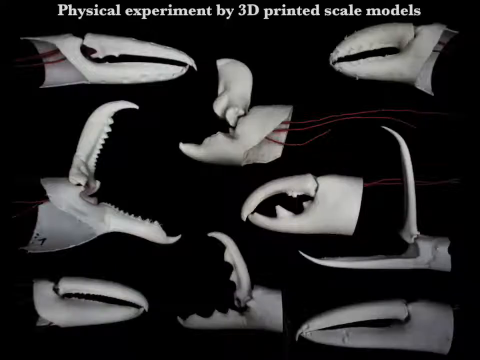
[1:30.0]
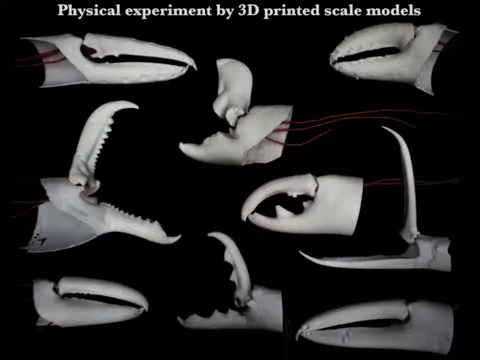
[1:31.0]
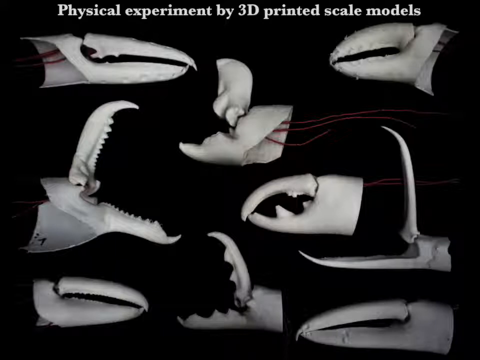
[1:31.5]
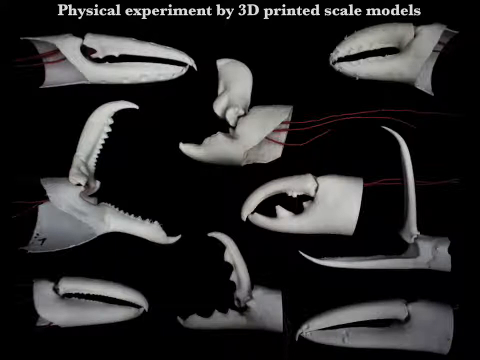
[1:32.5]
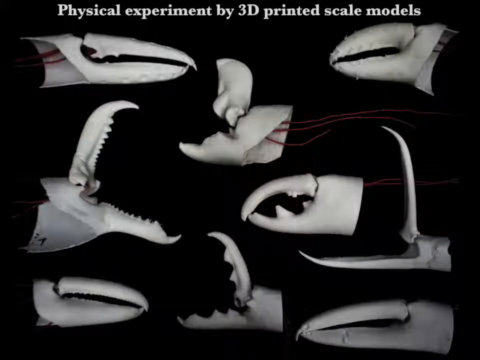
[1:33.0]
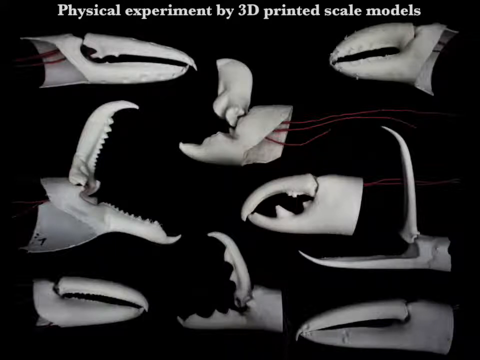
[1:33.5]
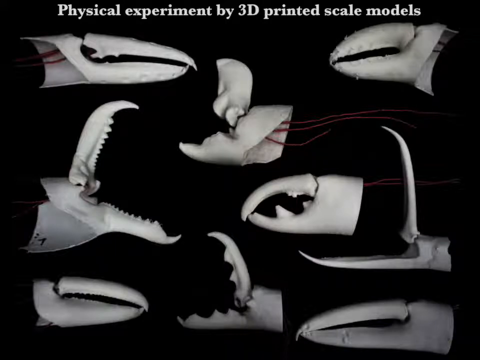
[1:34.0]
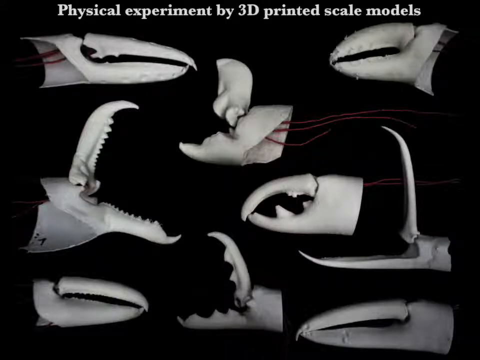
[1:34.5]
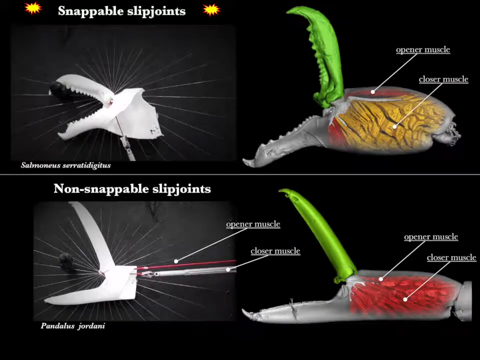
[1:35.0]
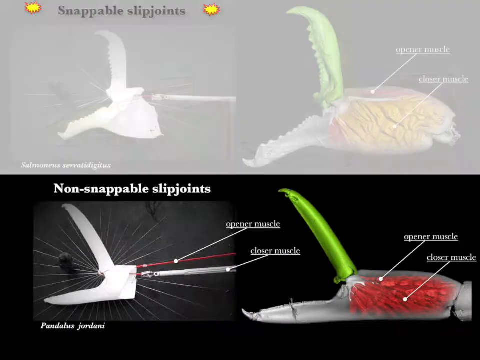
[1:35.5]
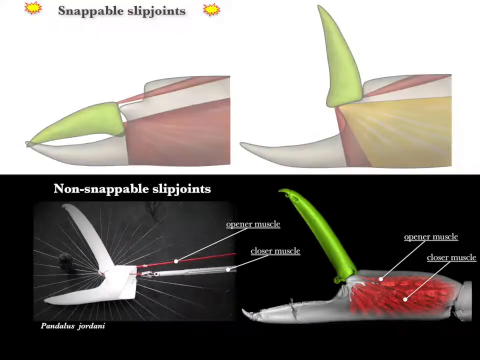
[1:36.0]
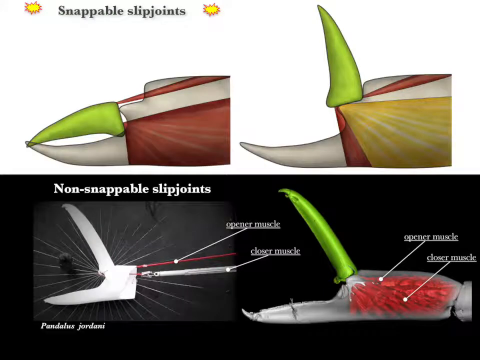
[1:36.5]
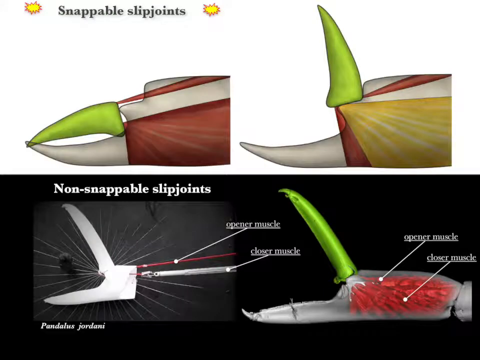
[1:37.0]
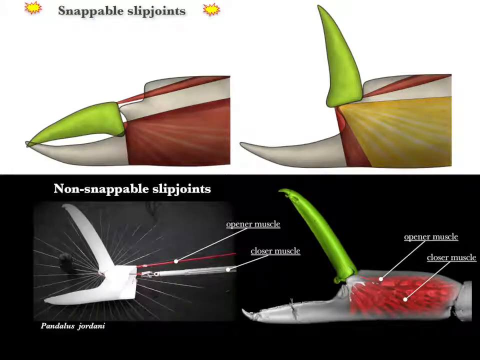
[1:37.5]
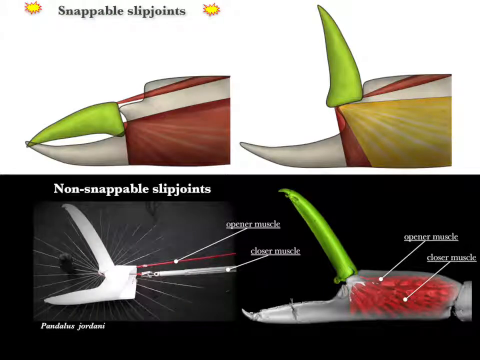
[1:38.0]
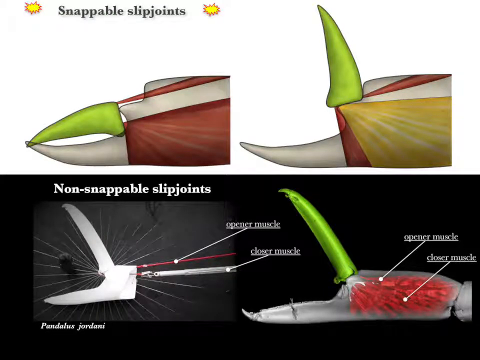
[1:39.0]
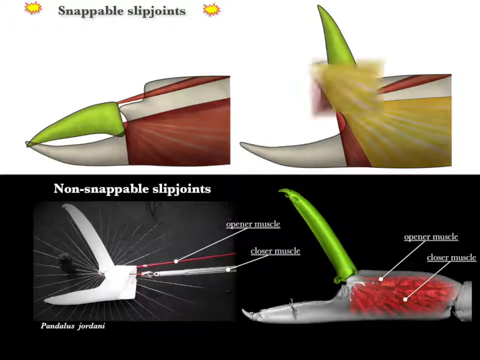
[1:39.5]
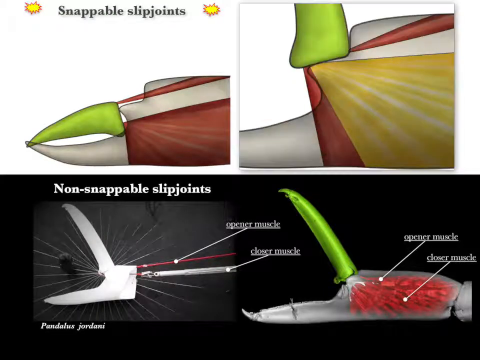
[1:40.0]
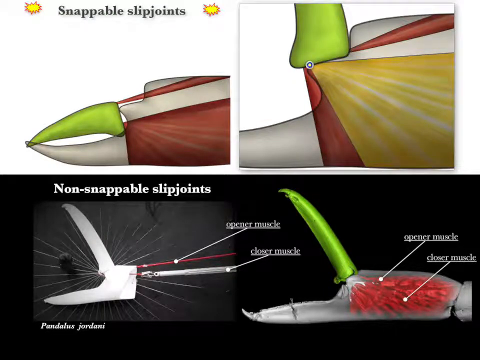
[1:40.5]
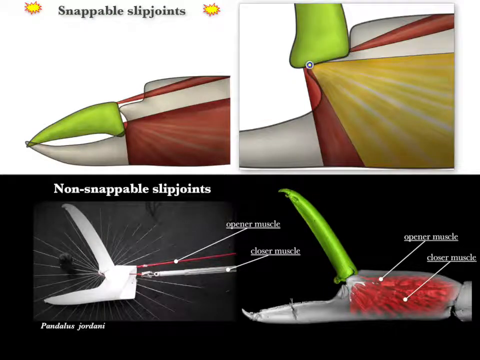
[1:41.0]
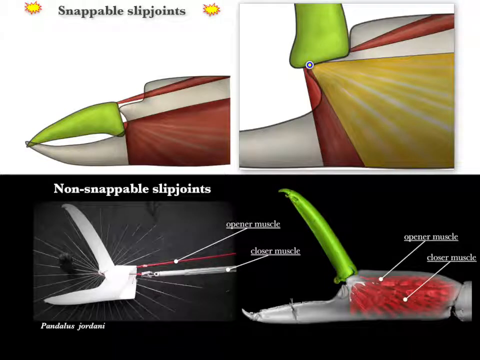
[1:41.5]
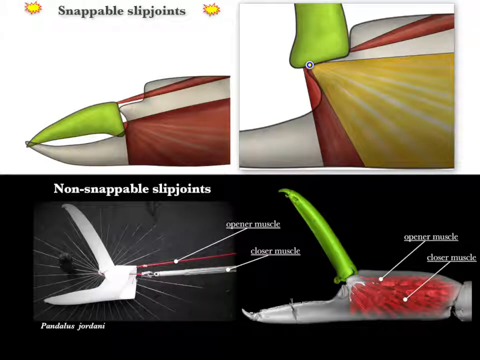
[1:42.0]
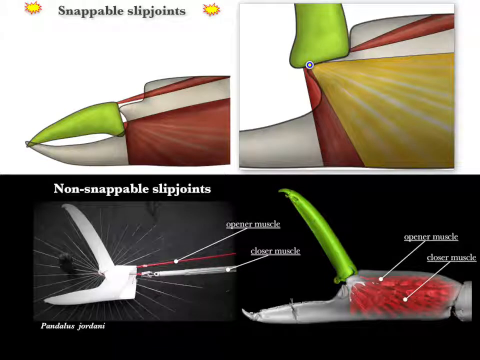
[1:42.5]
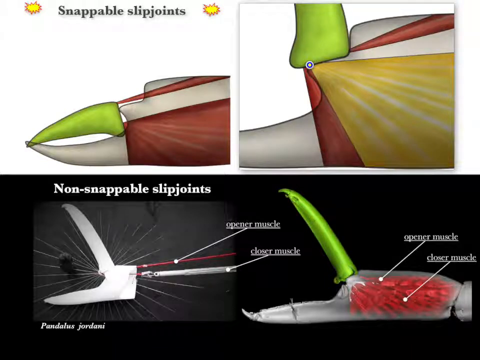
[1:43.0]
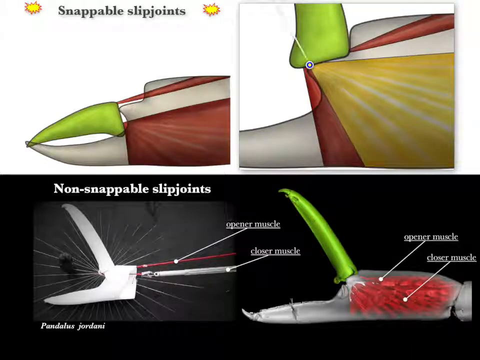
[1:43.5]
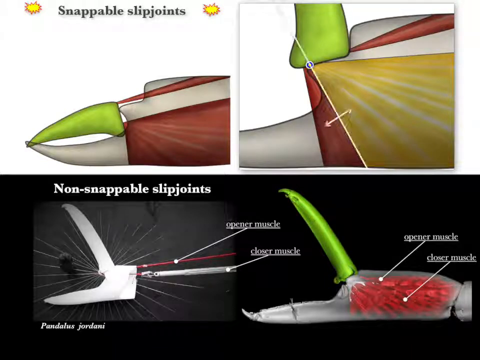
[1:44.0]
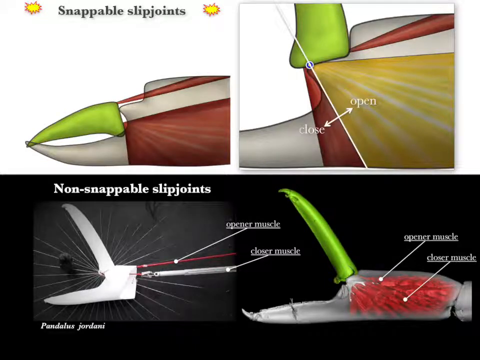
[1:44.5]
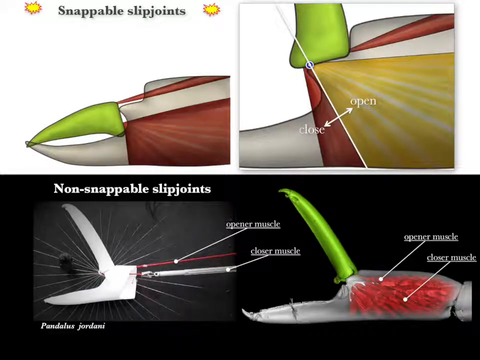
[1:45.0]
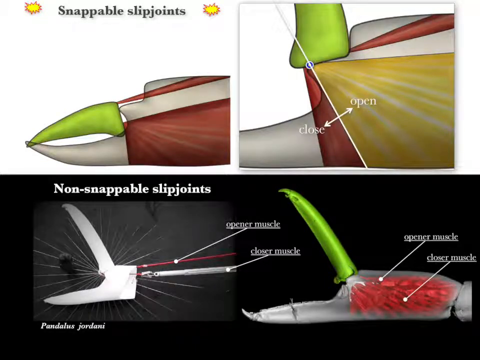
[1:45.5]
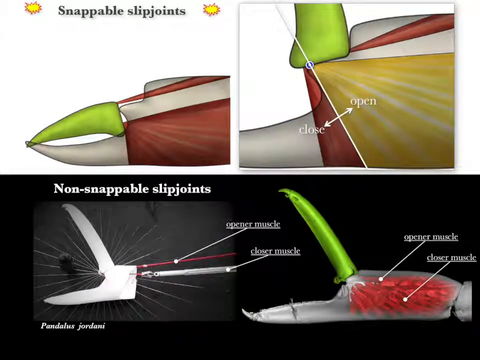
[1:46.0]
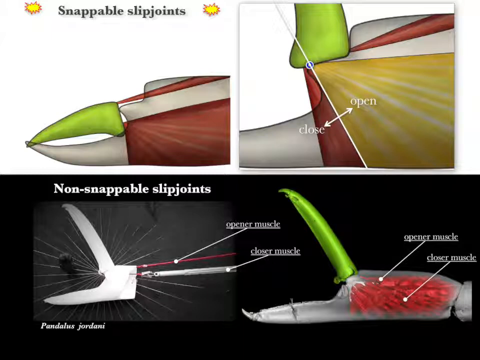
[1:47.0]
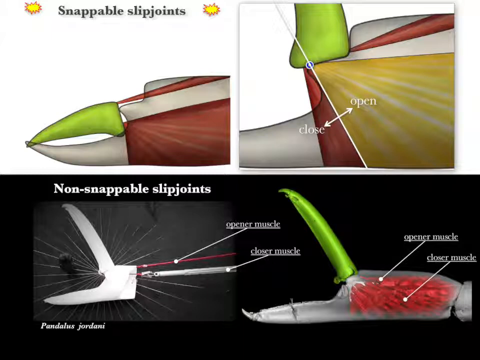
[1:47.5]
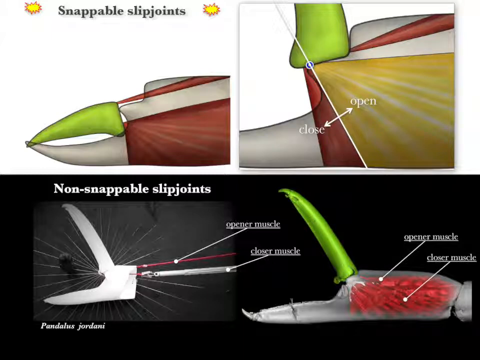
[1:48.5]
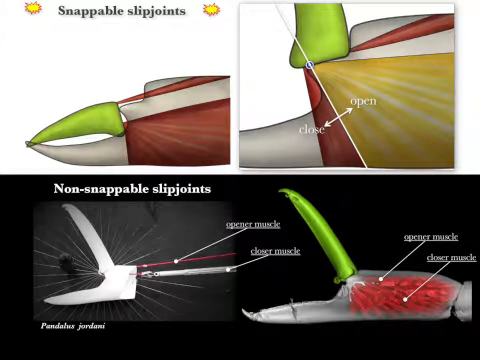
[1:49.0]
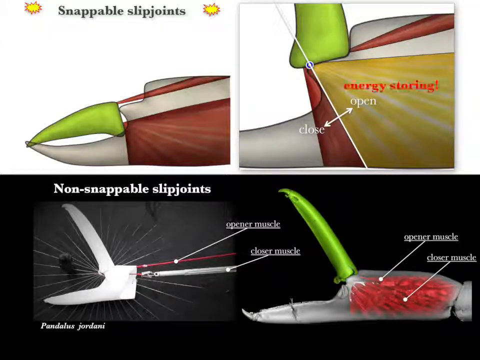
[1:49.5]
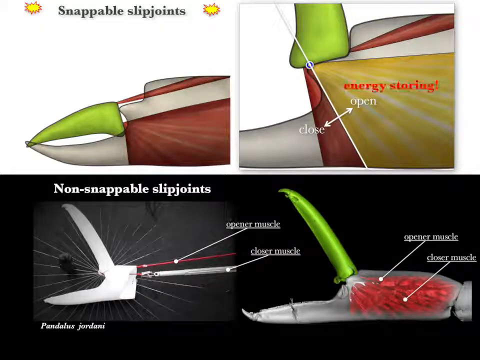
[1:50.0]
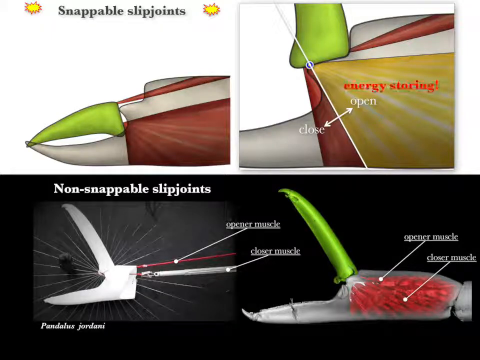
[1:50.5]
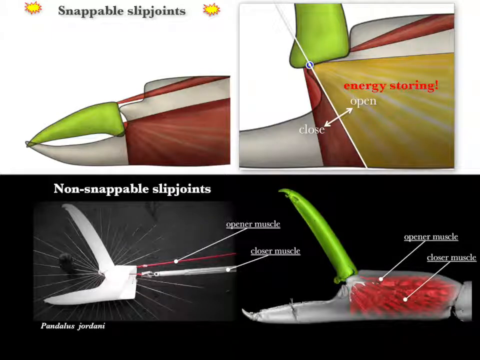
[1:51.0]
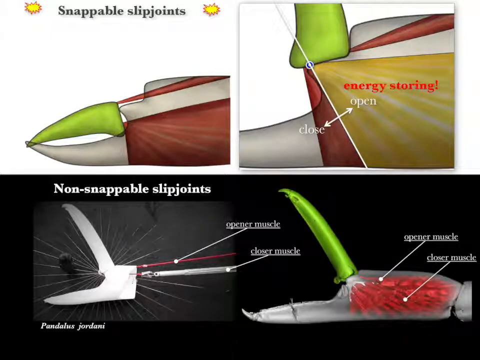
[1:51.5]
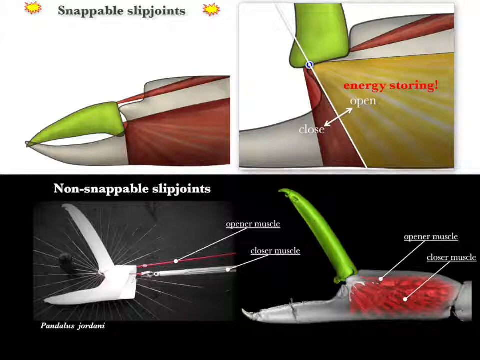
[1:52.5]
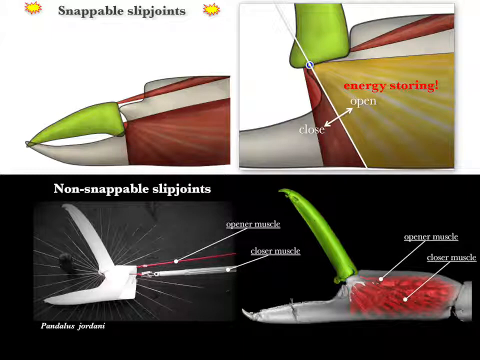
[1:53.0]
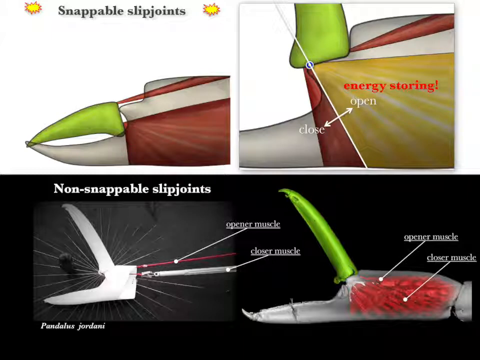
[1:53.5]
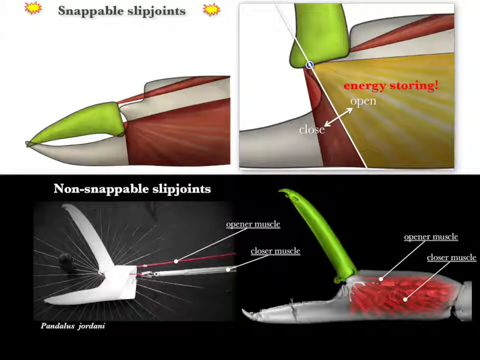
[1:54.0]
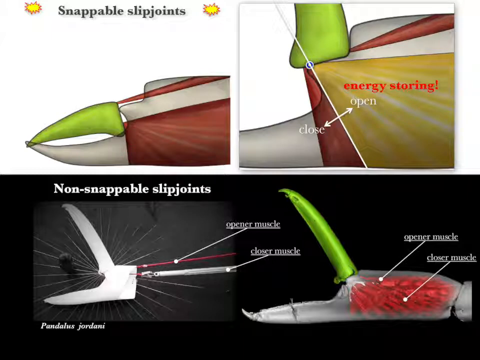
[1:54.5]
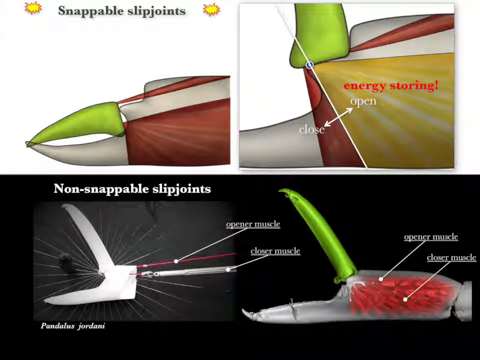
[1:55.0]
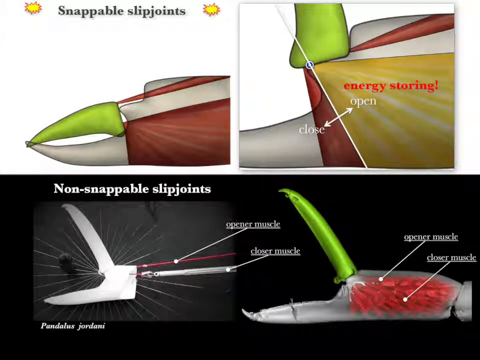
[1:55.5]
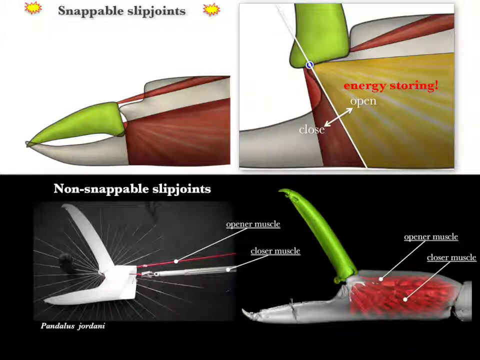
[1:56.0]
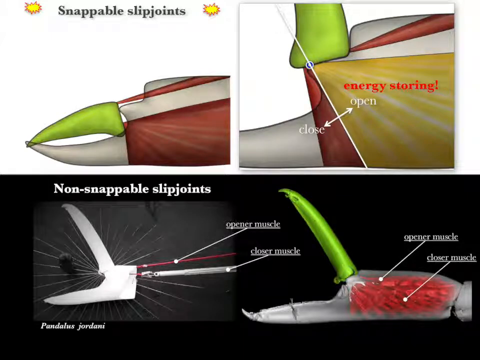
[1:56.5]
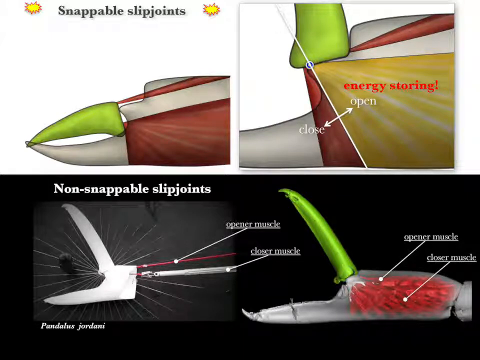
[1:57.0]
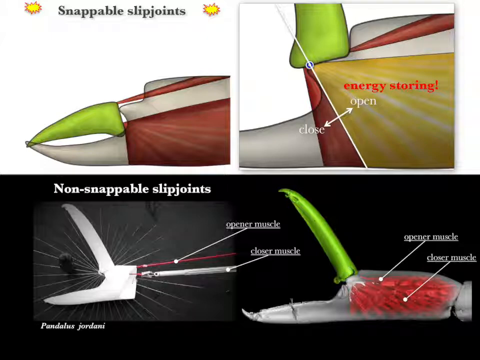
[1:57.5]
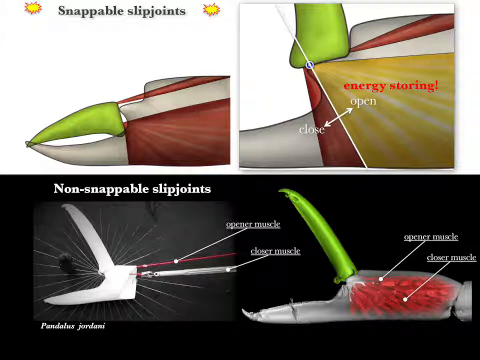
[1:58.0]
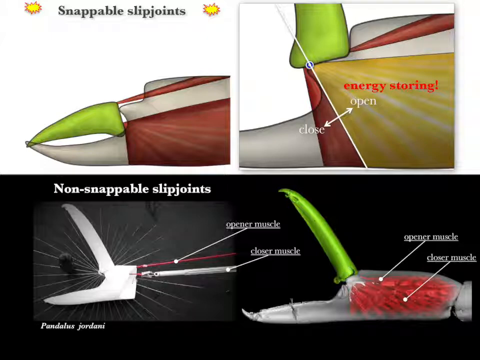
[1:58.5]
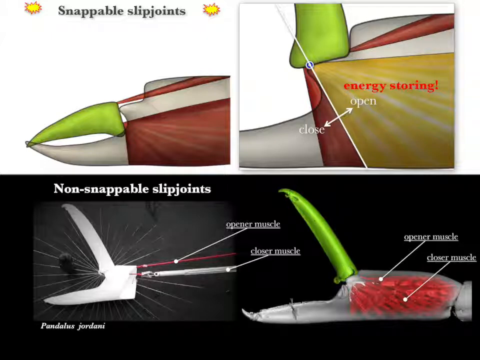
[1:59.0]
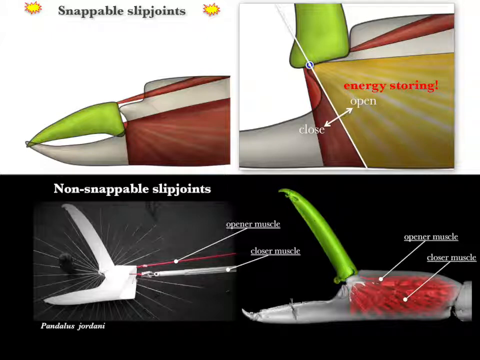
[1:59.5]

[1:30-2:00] The black background with all the different types of pinchers is shown, then it switches to a screen whose top half is gray and bottom half is black. In the top left corner is a little yellow explosion with an orange border, kind of like in a comic book, then white text reading "snappable slip joints", followed by another little yellow explosion. Below that is a pincher opened wide; it is longer, jagged in the center and pointy on the left side, with one part pointing up and one pointing down to the left corner. On the right side is kind of a diagram of it, with the top pincher green and the bottom one gray in the same formation, a couple of arrows pointing down to it, and lettering above describing some of its parts. Below, text reads "non-snappable slip joints". This one has more slender pinchers, with the bottom one going across and the right one going up. Coming out behind it is a red line labeled "opener muscle", and below it a gray one labeled "closer muscle". On the right side is a 3D model with the same color design as the one above, with arrows pointing down to different parts of it. The top one then changes: the left one shows a pincher, green on top and gray on the bottom, touching each other, like a cartoon 3D rendering, with red and white behind it for the muscles and tendons. The bottom two-thirds of it is red, then there is a little white strip, then red, and then white in the corner. In the one to the right of it, the green part points straight up and the red has turned mostly yellow except at the bottom left. The view then wipes and zooms in a little closer on the right side where the green pincher is. A line comes down from the left at an angle, with closed at the bottom and open as before, and above "open" red text reads "energy storing".